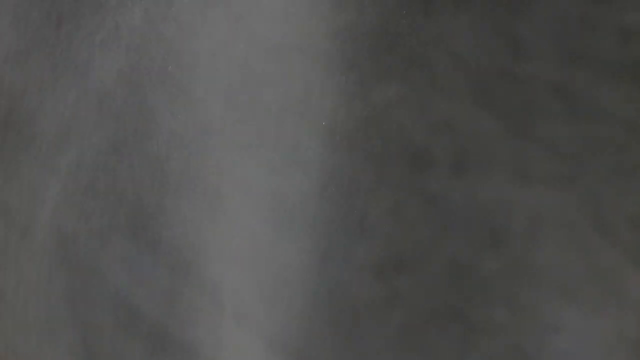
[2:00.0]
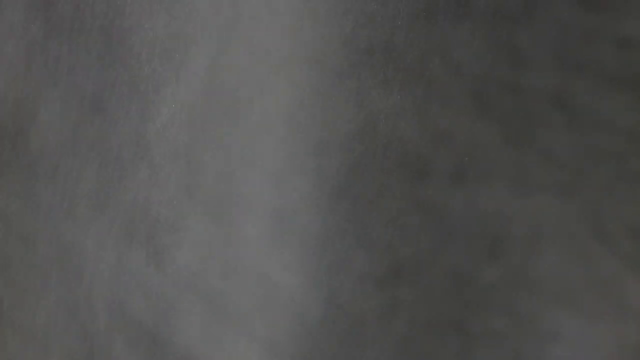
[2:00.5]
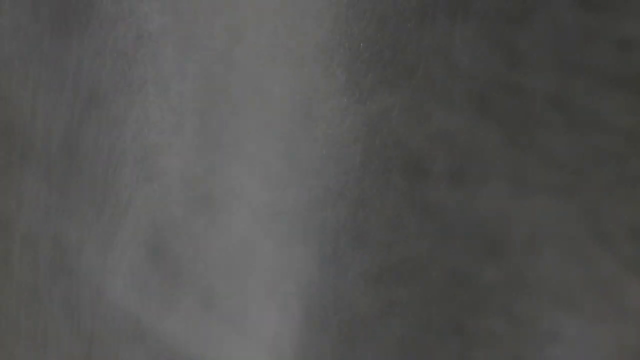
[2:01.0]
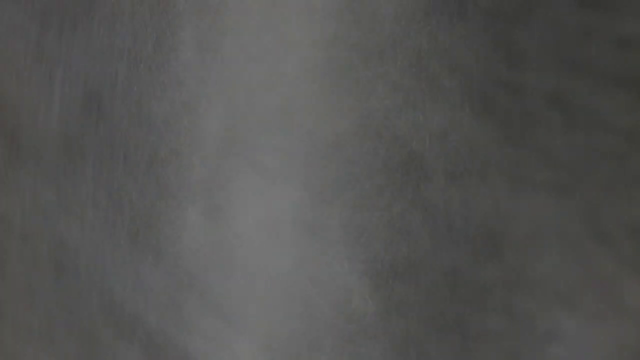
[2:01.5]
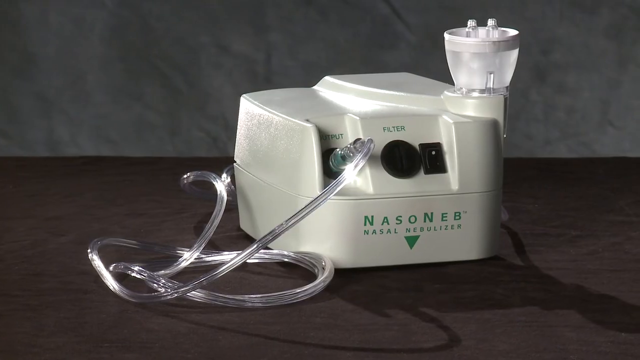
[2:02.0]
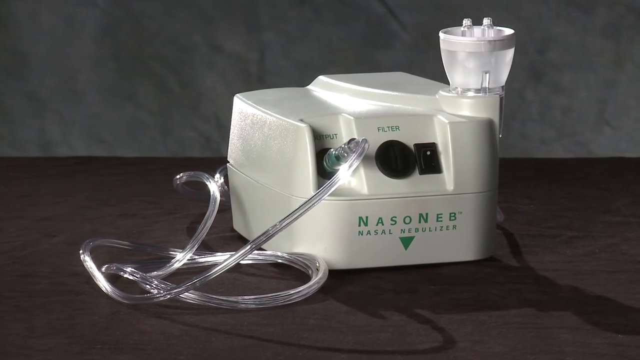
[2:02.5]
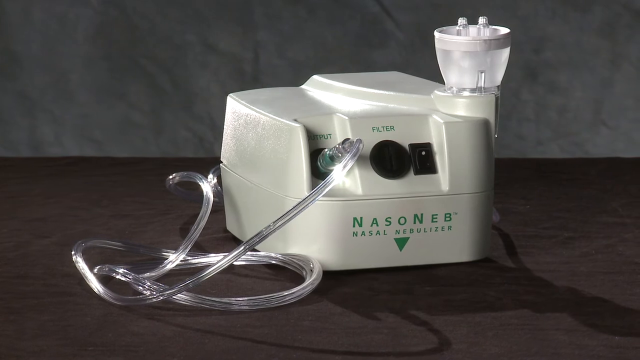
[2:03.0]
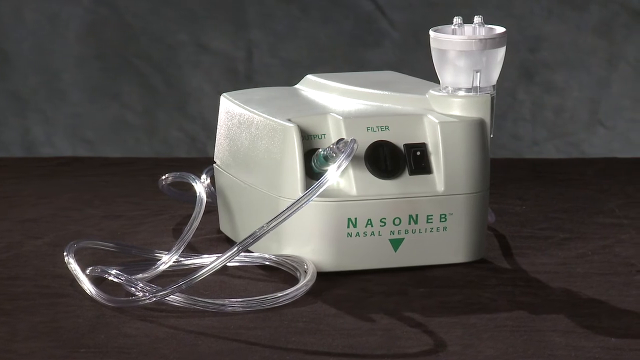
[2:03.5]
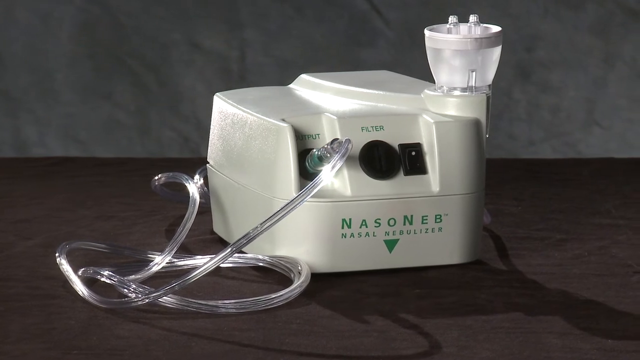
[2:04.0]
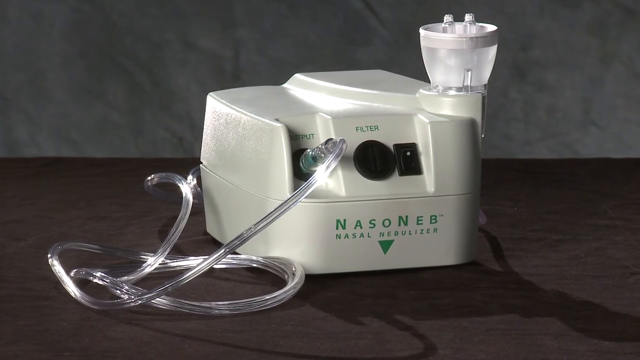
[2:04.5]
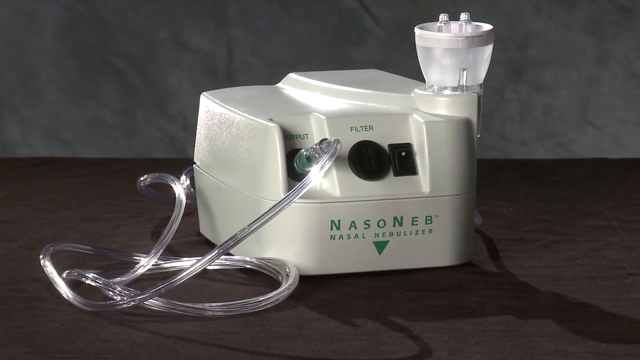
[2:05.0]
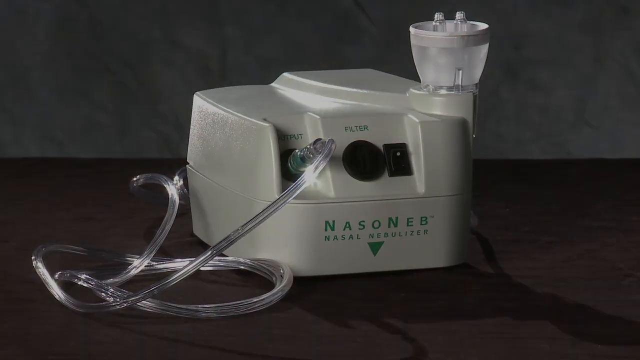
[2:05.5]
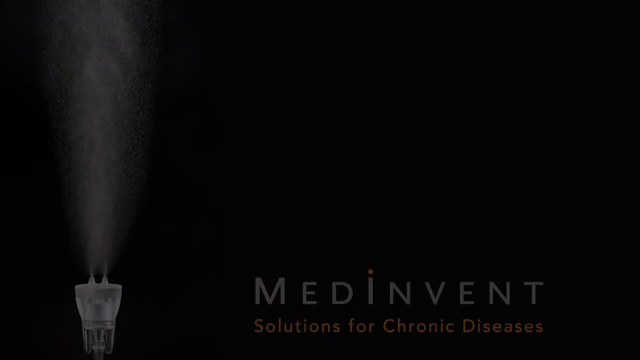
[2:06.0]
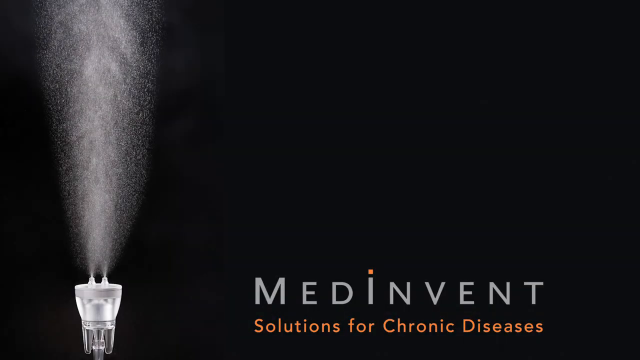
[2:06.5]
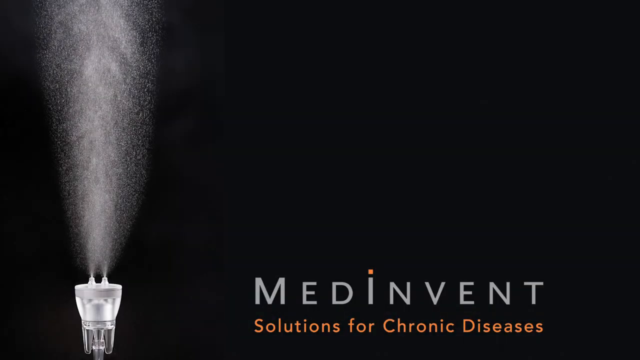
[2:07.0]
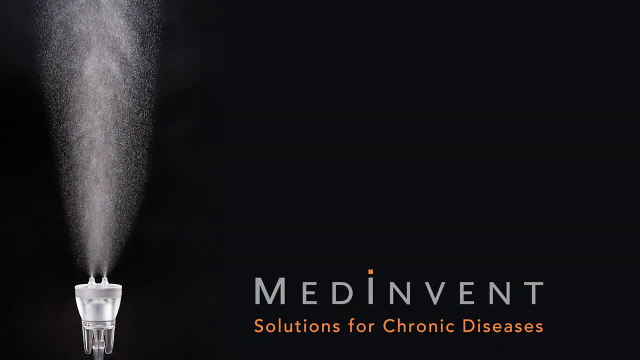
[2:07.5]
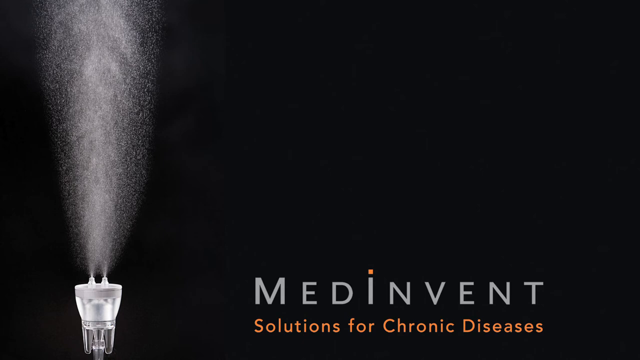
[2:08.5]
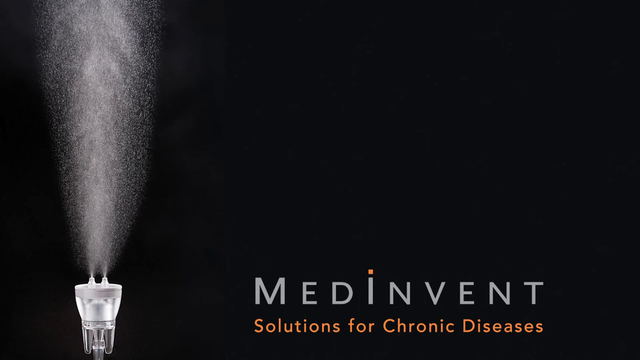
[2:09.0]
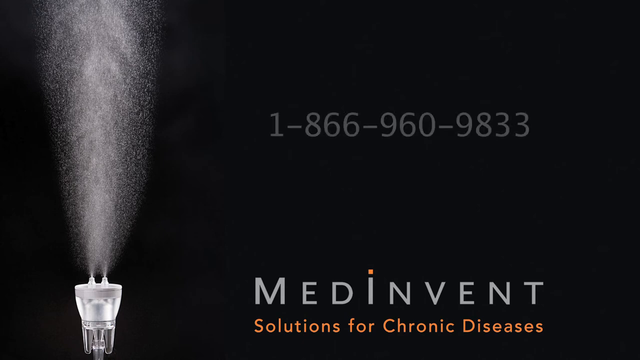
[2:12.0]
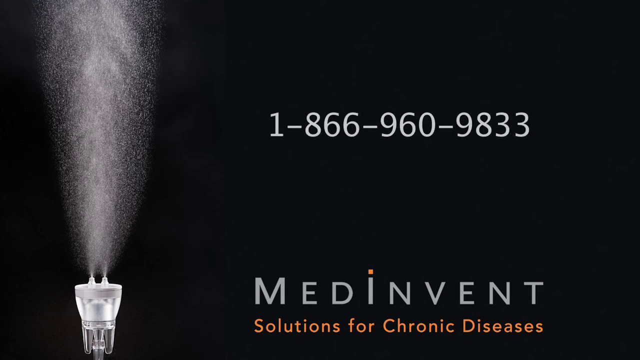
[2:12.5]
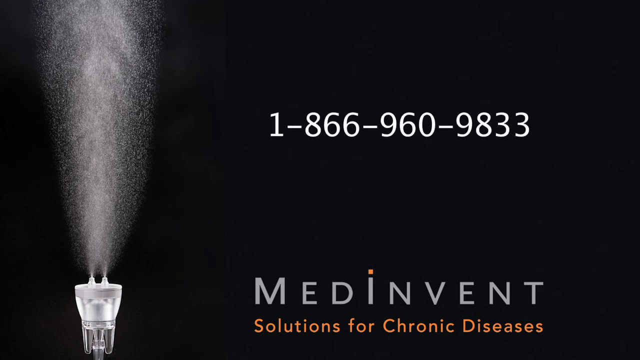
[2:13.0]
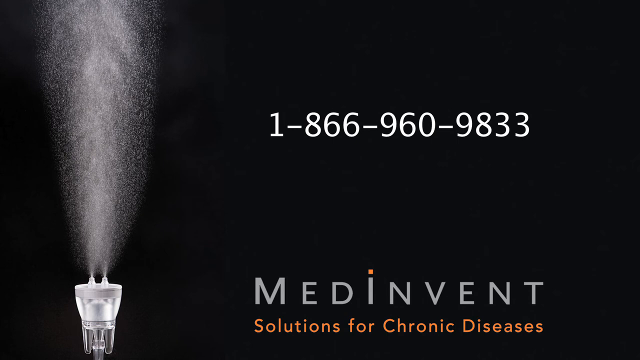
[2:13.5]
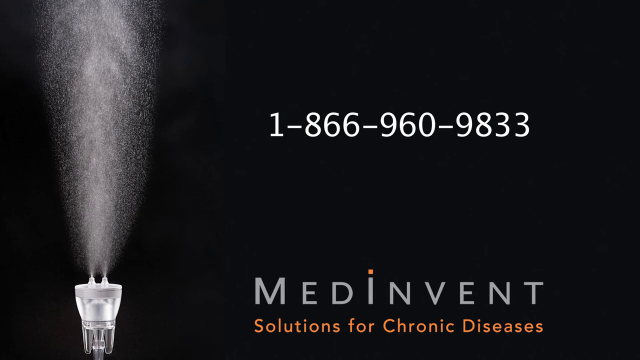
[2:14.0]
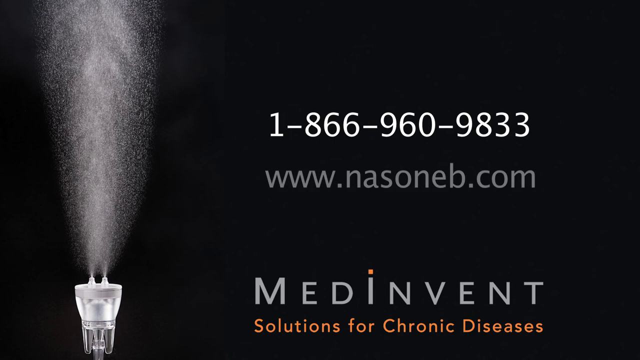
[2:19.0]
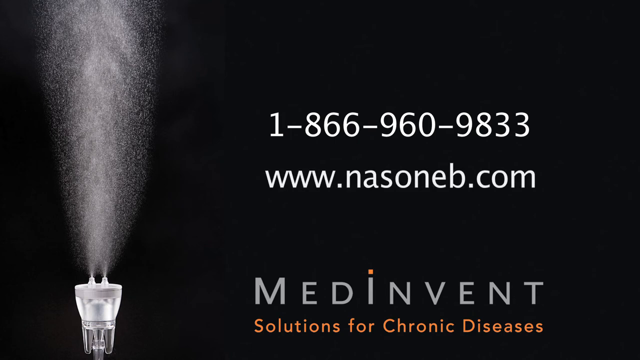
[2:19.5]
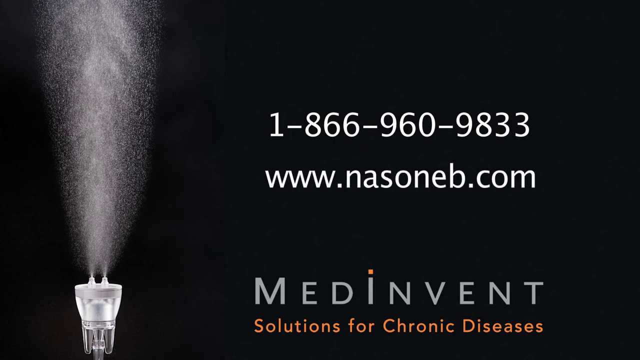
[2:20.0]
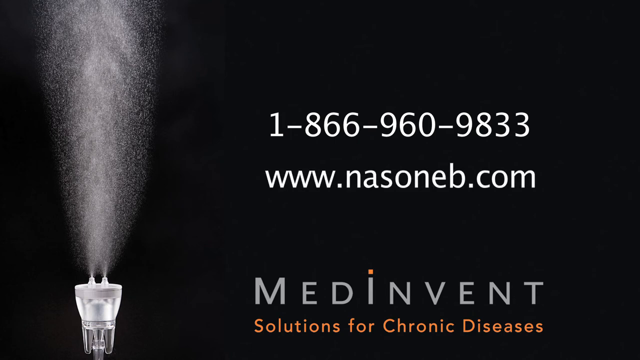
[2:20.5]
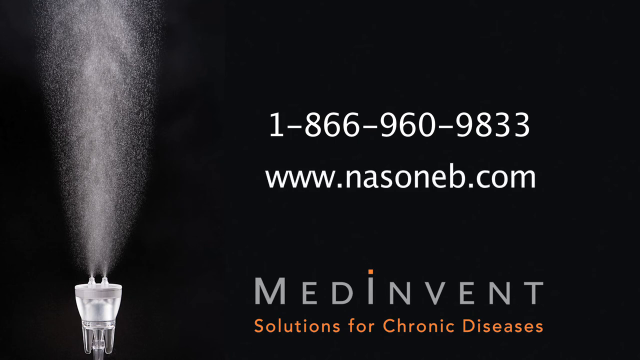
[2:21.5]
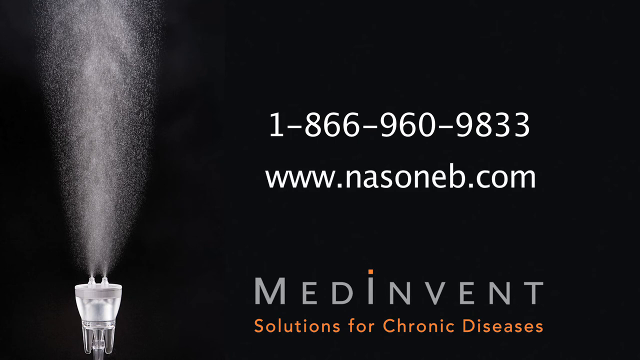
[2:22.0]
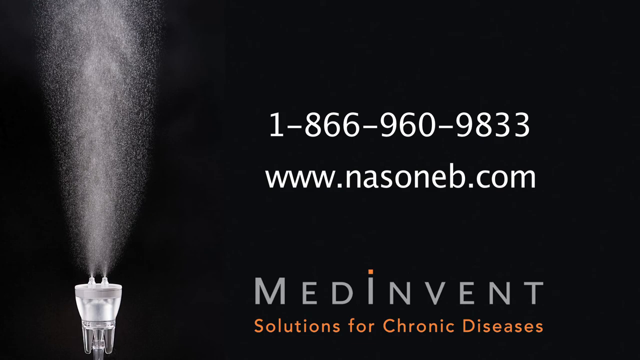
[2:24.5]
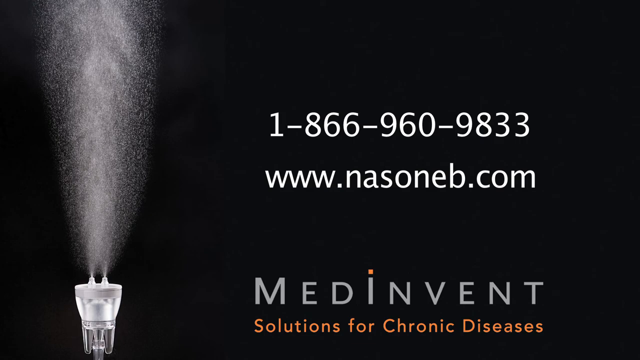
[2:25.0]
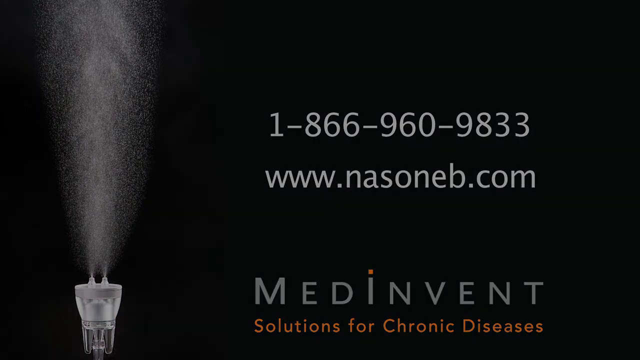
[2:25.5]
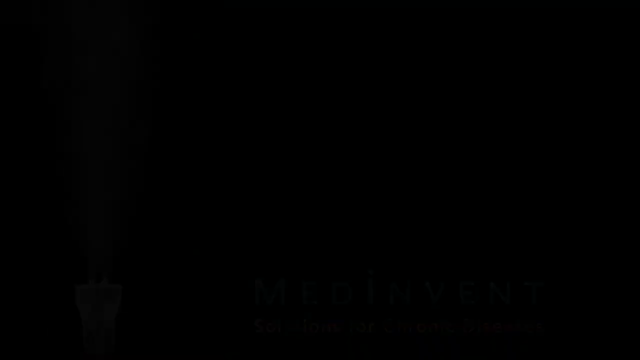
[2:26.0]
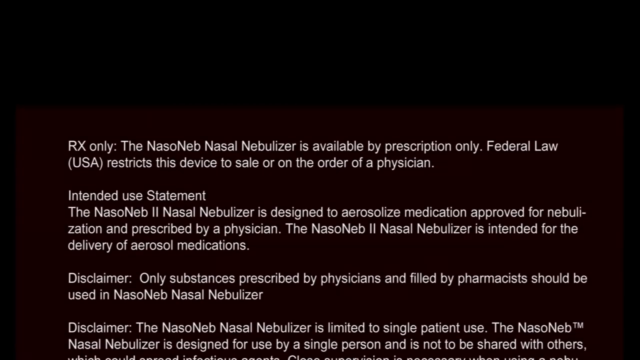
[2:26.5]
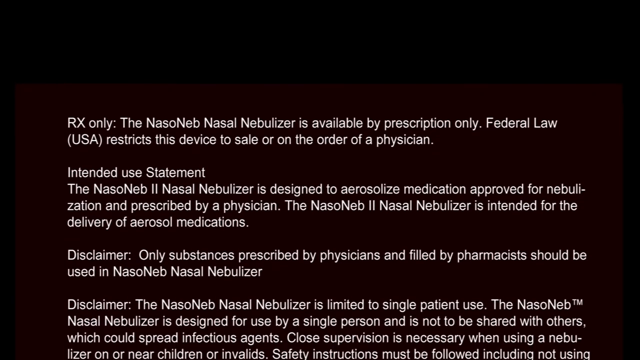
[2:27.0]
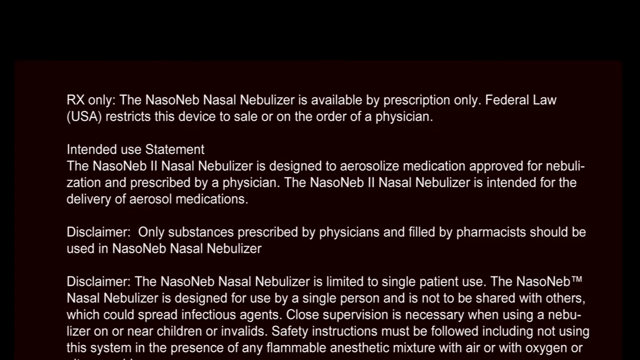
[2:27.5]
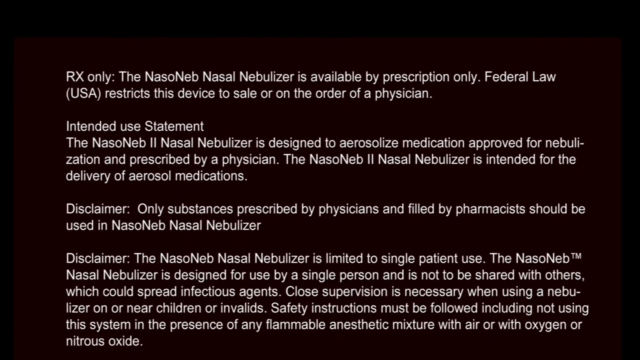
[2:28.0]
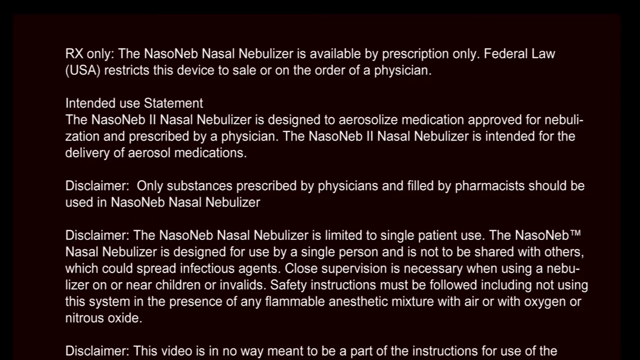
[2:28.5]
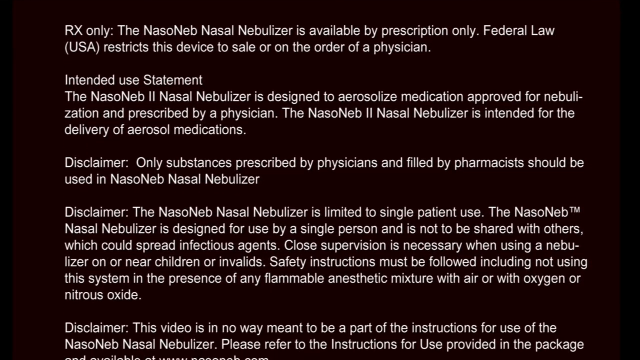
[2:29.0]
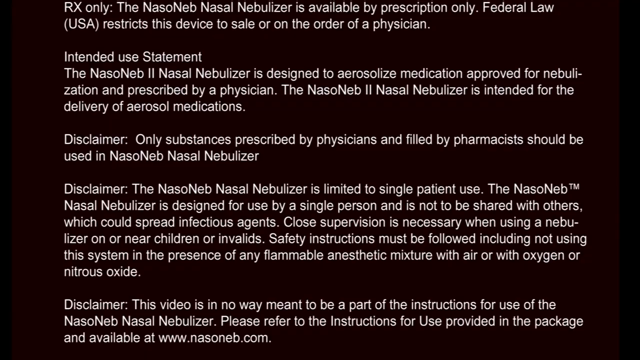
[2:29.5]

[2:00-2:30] The nasal nebulizer machine is shown still set on the black table against a grey background. An animation or picture shows the nasal piece together with the medicine, and text in the bottom right section reads "made in vent solution for chronic diseases". Then, on a black background, the number "1-866-960-9833" and "www.nasoneb.com" appear. A disclaimer and intended use statement follow, reading "RX only. The nasal nebulizer is available by prescription only. Federal law, USA restricts this device to sale or on order of a physician." The intended use statement says the nebulizer "is designed to aerosolize medication approved for nebulization and prescribed by physician" and "is intended for the delivery of aerosol medications".